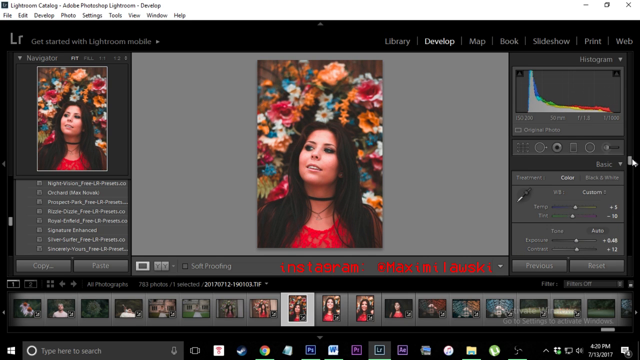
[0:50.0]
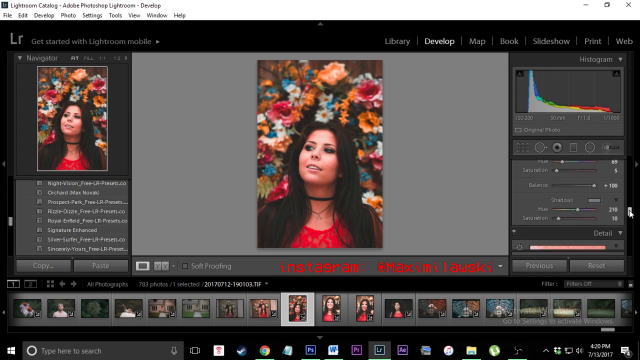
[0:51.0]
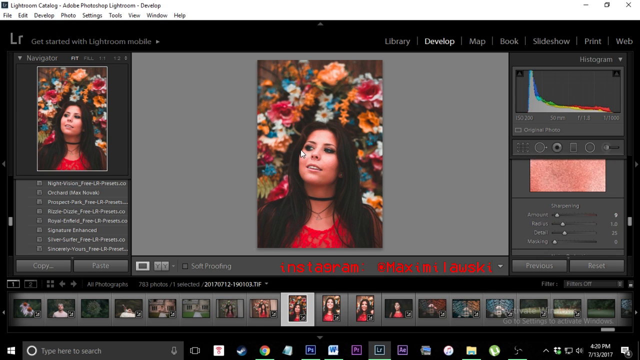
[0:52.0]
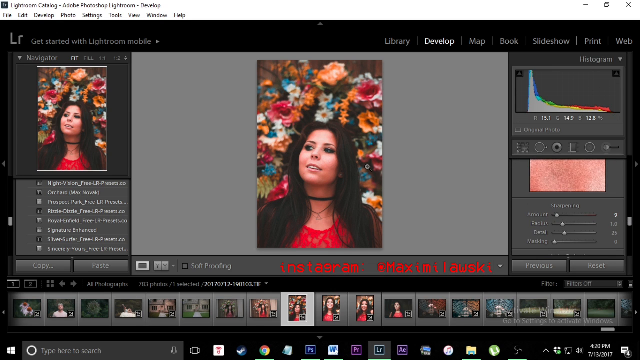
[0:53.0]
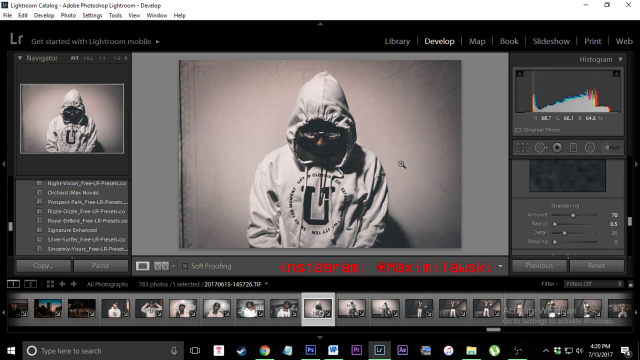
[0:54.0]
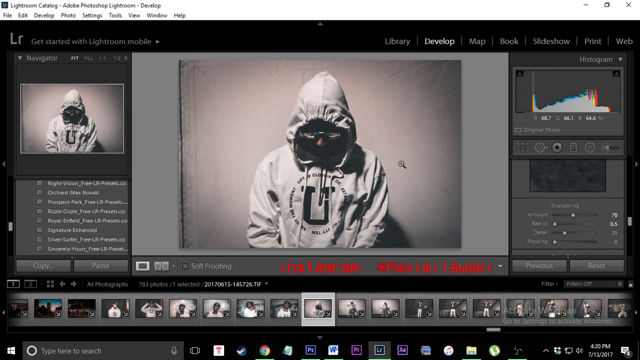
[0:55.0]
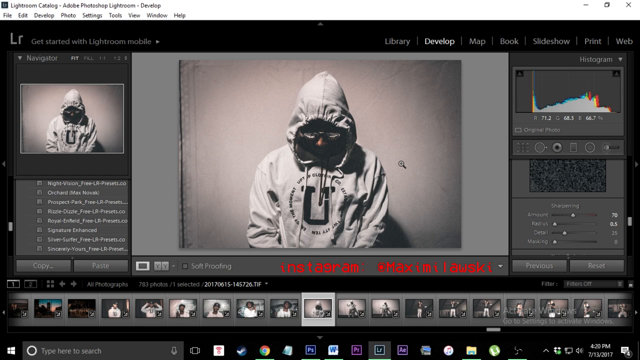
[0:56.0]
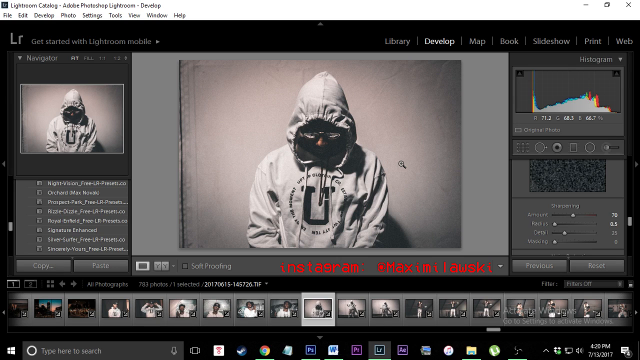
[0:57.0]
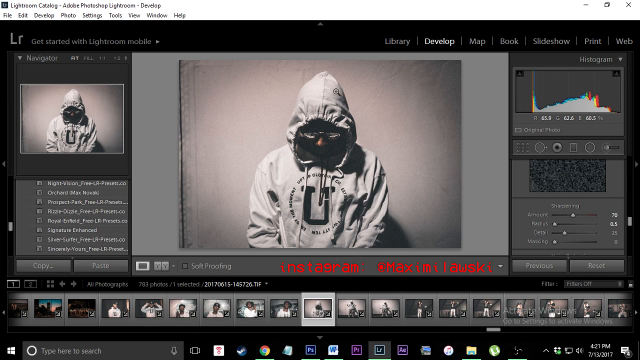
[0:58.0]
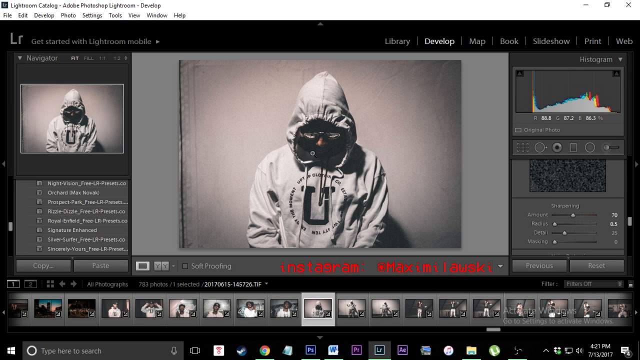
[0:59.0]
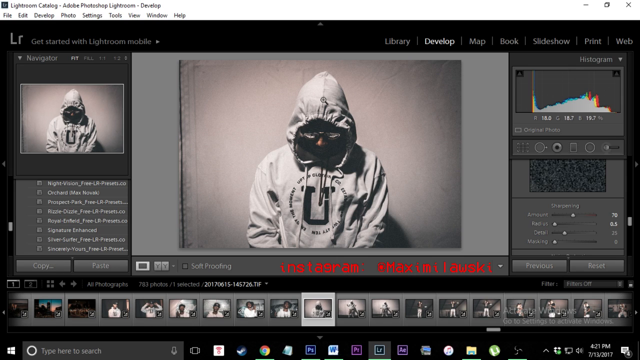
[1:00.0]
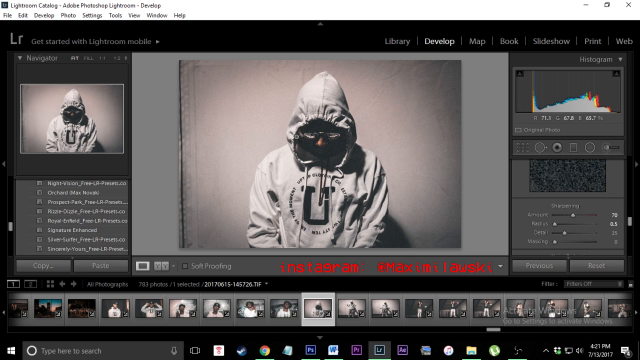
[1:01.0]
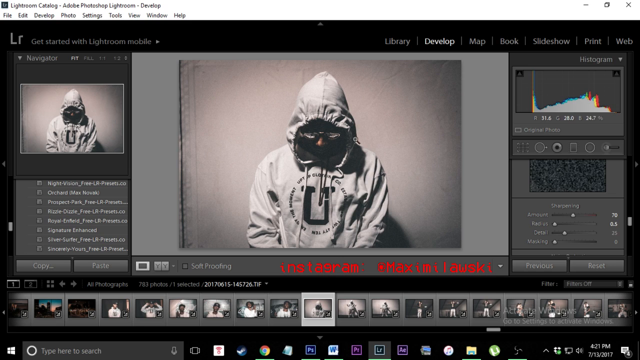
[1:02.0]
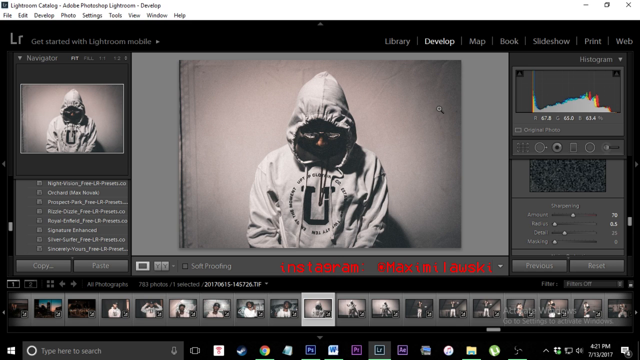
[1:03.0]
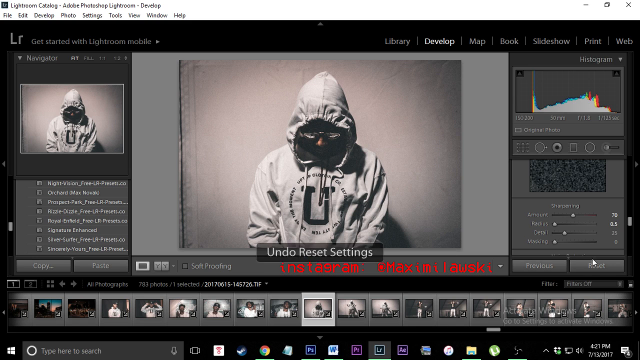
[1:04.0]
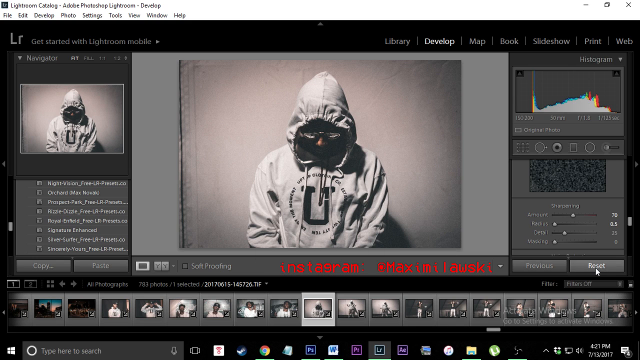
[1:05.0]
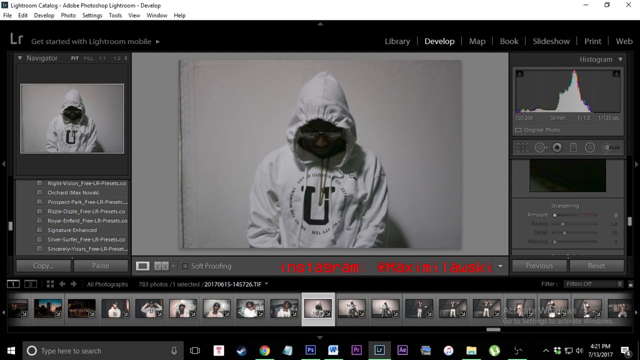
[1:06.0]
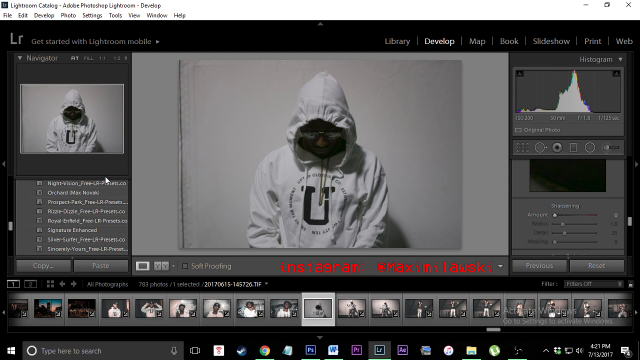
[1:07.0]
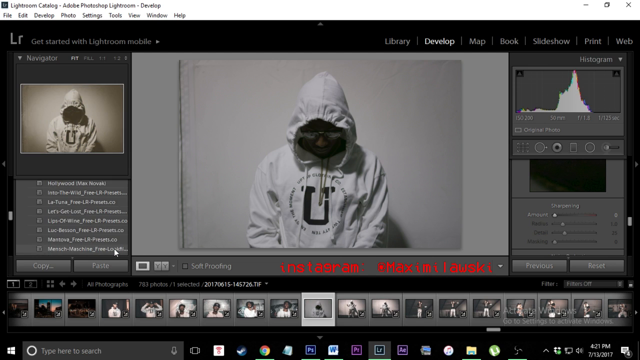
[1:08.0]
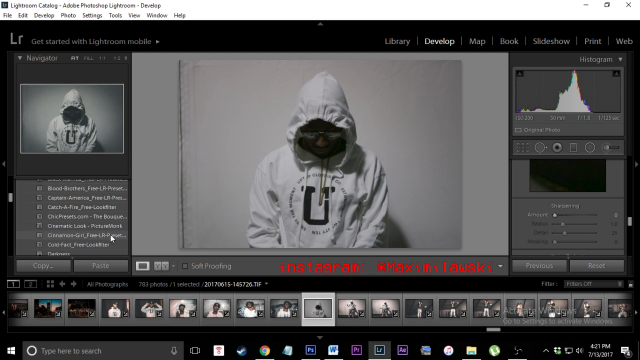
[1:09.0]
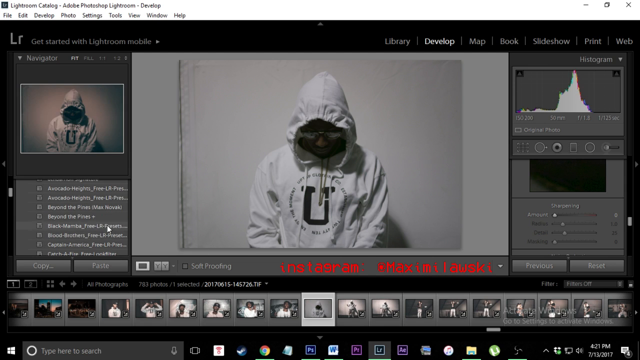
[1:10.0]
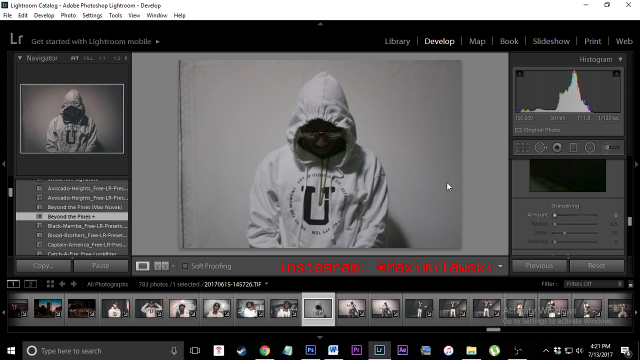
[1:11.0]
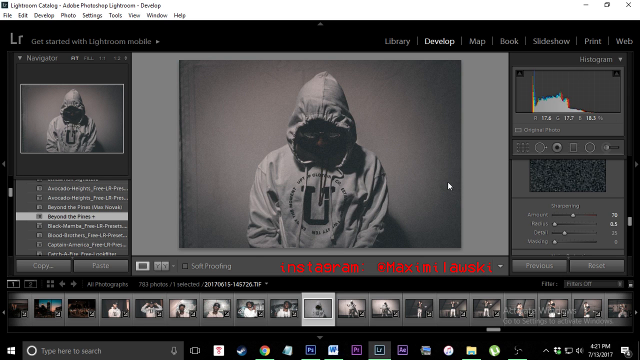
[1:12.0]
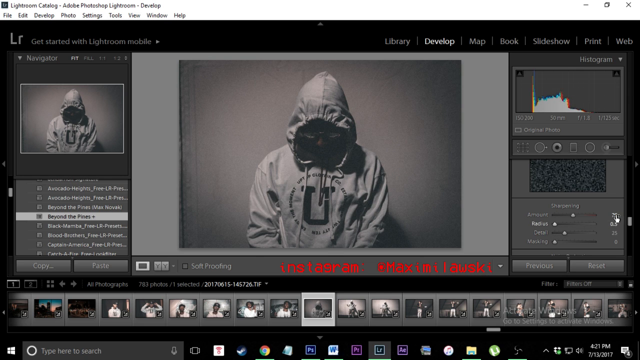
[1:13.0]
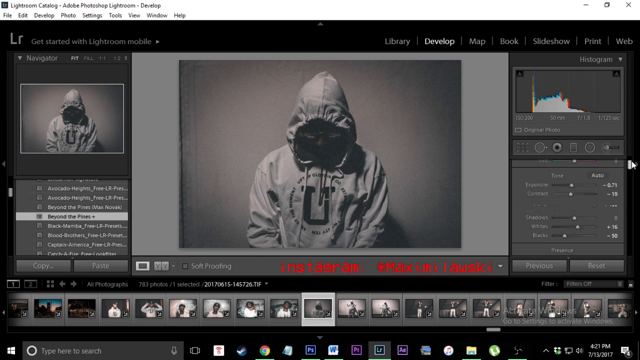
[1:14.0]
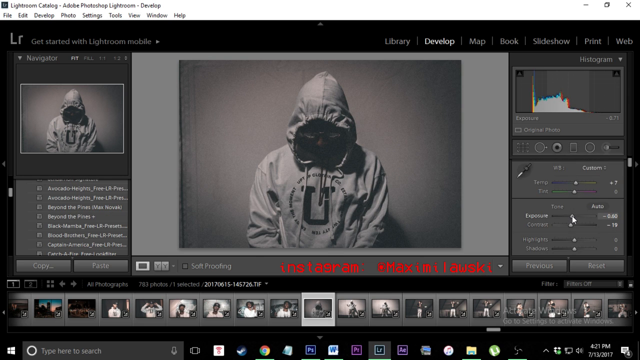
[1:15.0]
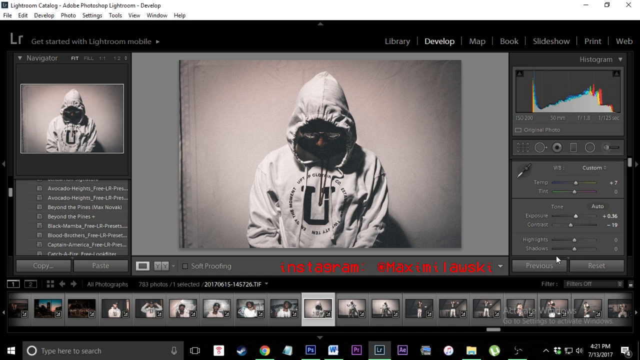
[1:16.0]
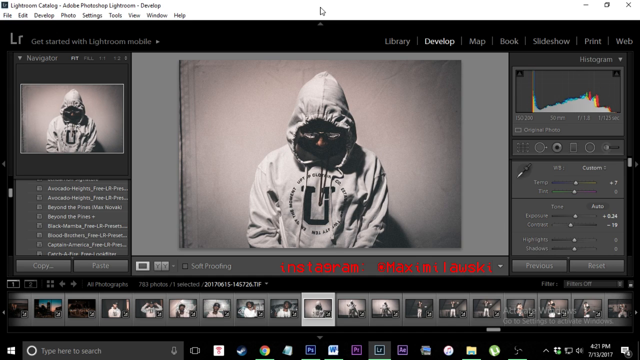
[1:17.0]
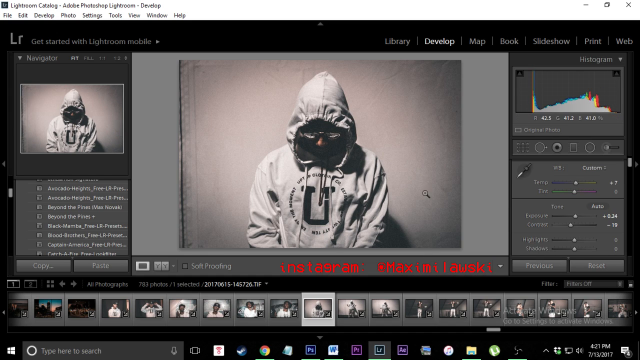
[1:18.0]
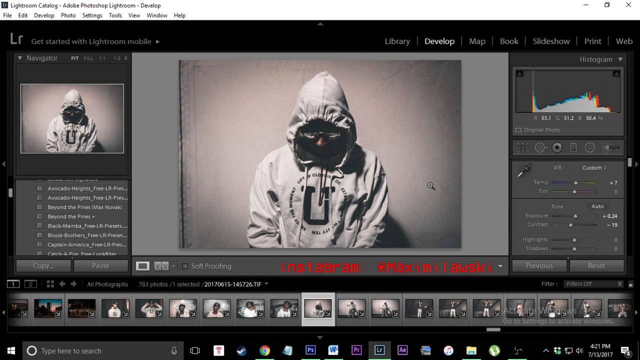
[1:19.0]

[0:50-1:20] An image shows a woman wearing red clothing with flowers behind her. The website is still on screen, and someone uses a pointer to click on parts of the app; when an option is clicked, the image becomes dull as an effect is applied to the original photo. Next comes a photo of a man wearing a white hood. Effects are applied to this photo as well; the pointer clicks on parts of the website showing options to reset and to apply an effect, and the photo becomes dull and dark, demonstrating adjustment of the photo's brightness.